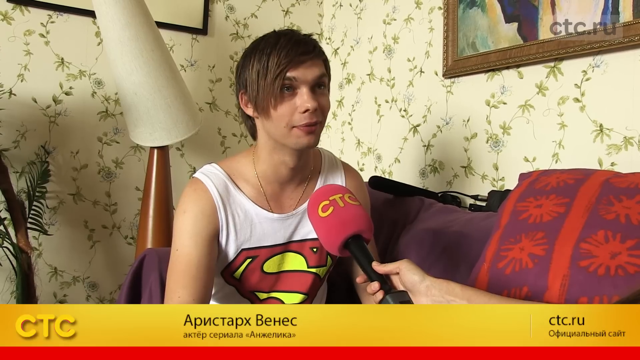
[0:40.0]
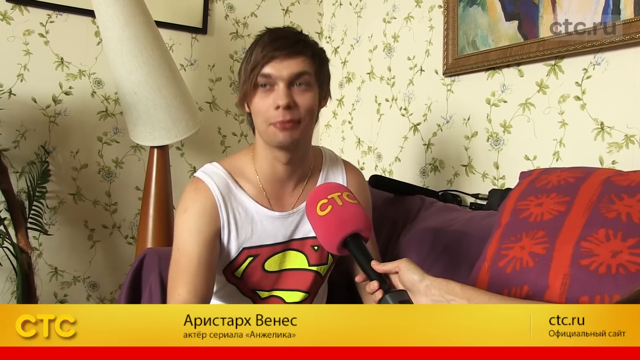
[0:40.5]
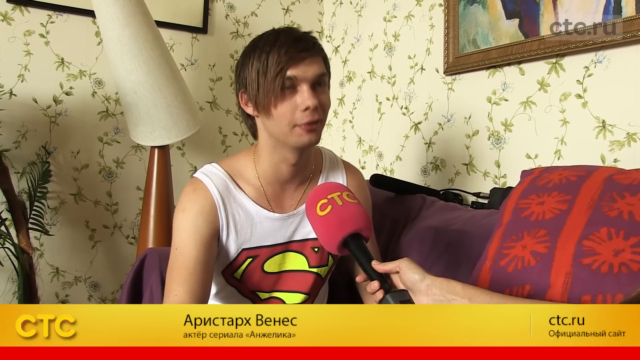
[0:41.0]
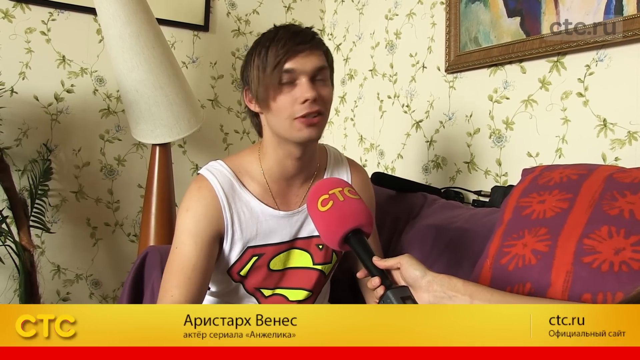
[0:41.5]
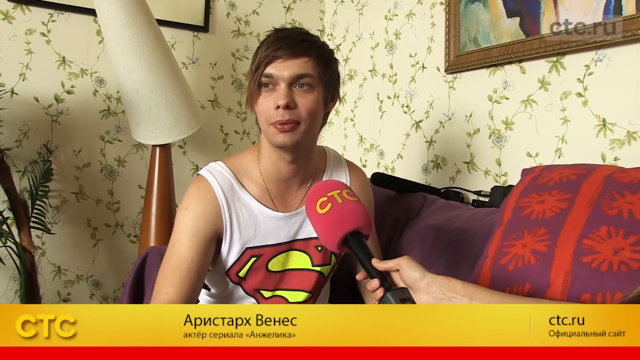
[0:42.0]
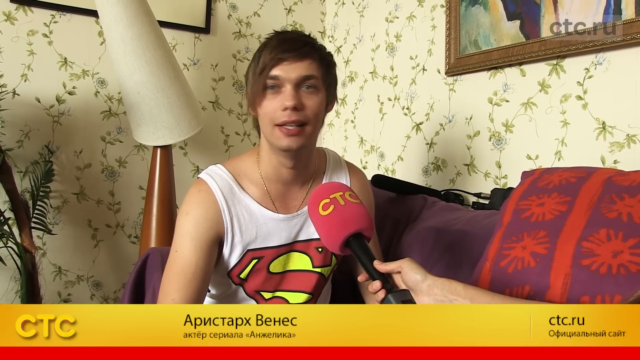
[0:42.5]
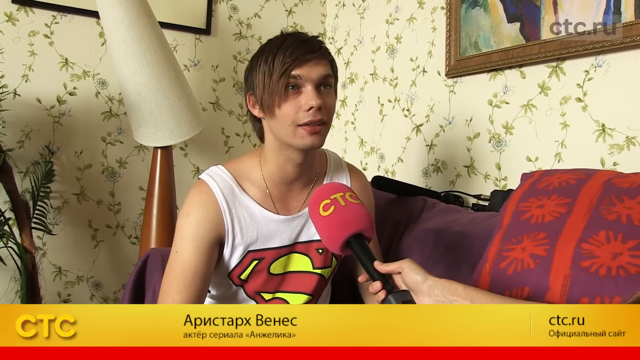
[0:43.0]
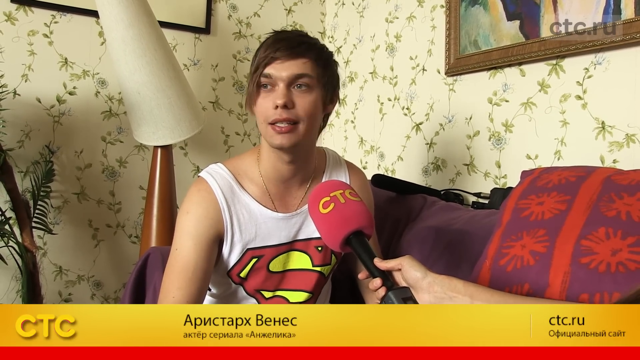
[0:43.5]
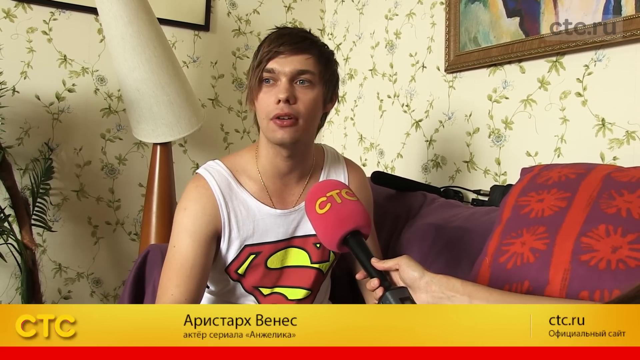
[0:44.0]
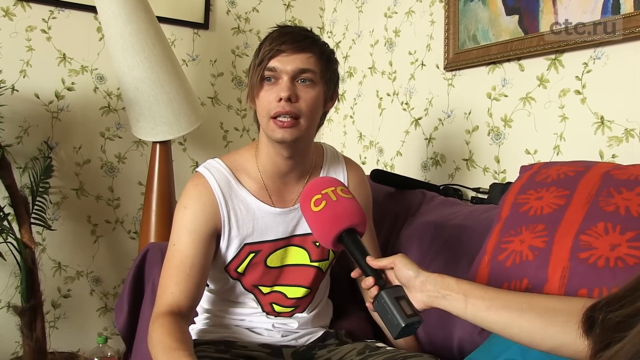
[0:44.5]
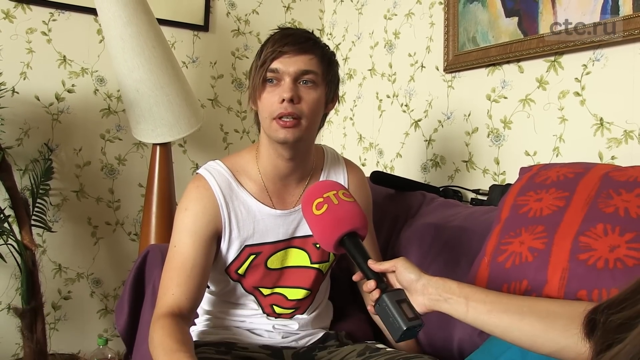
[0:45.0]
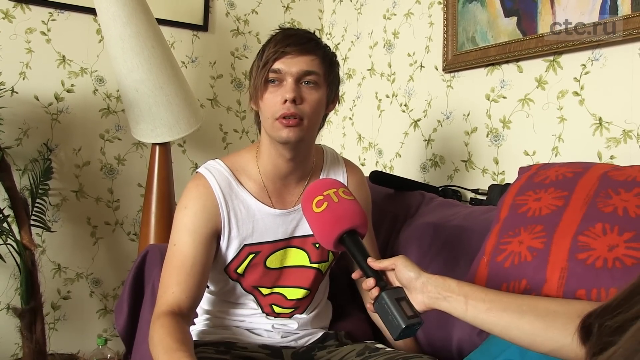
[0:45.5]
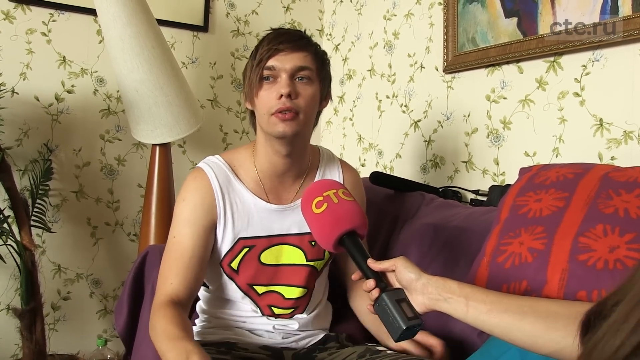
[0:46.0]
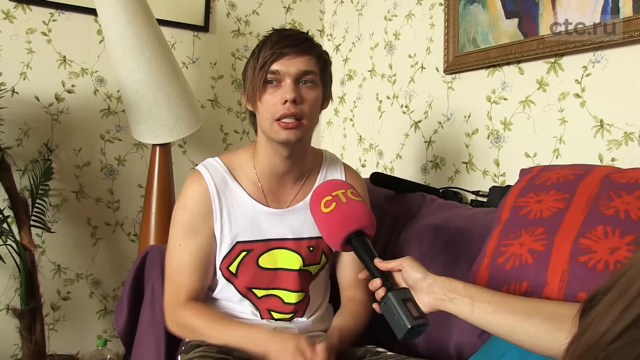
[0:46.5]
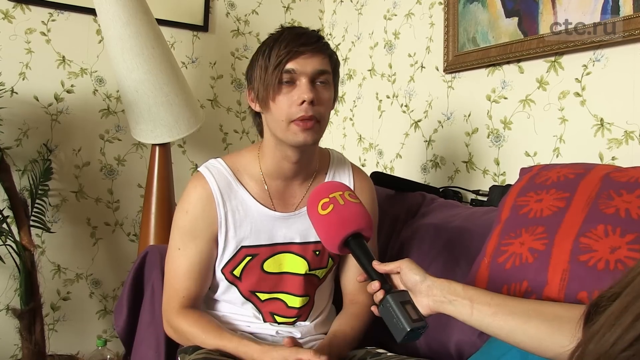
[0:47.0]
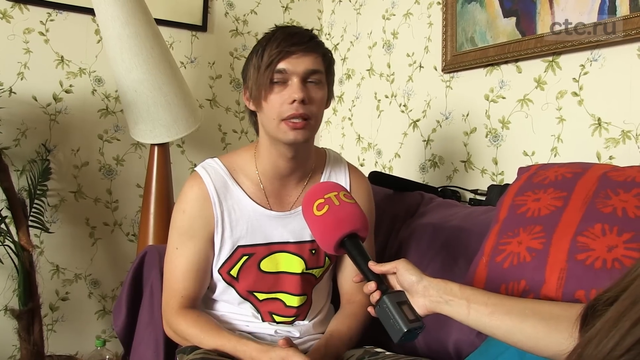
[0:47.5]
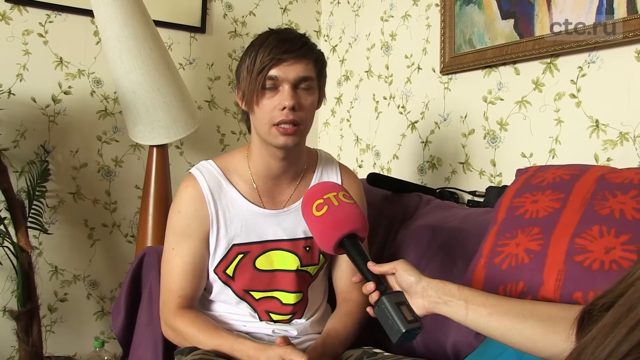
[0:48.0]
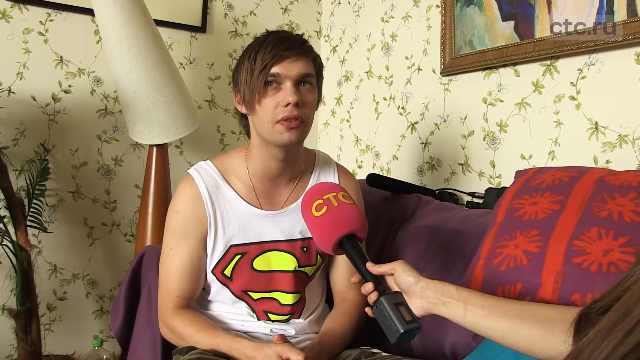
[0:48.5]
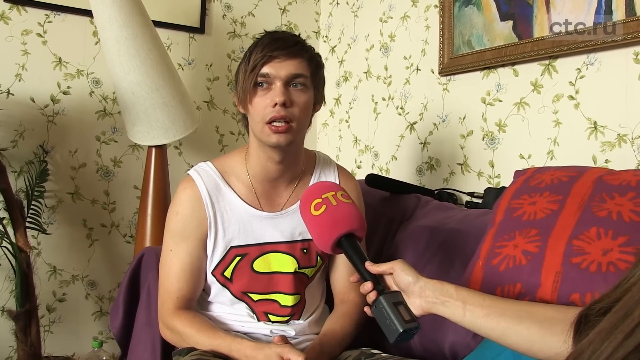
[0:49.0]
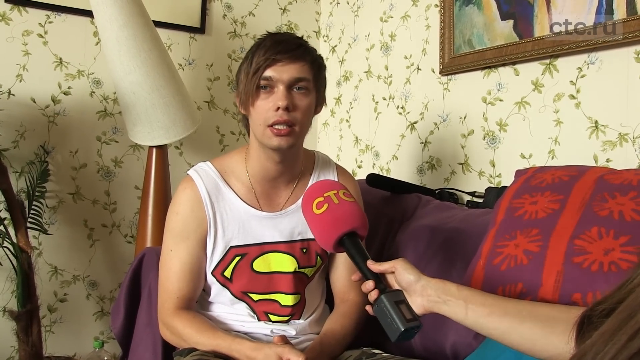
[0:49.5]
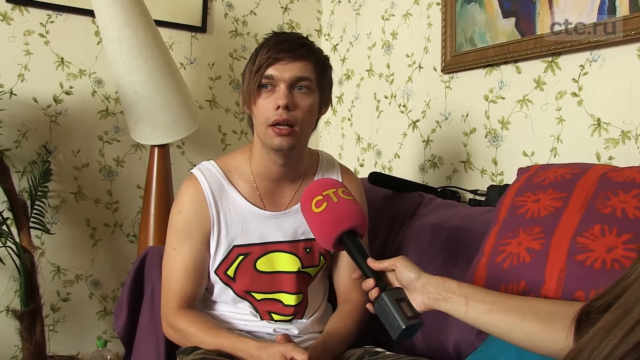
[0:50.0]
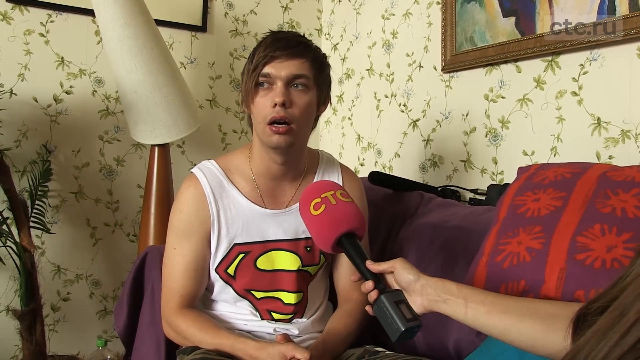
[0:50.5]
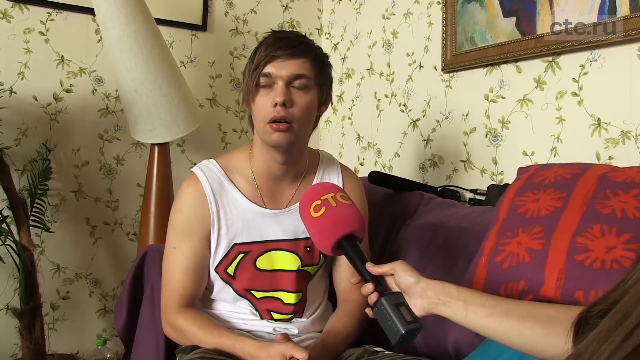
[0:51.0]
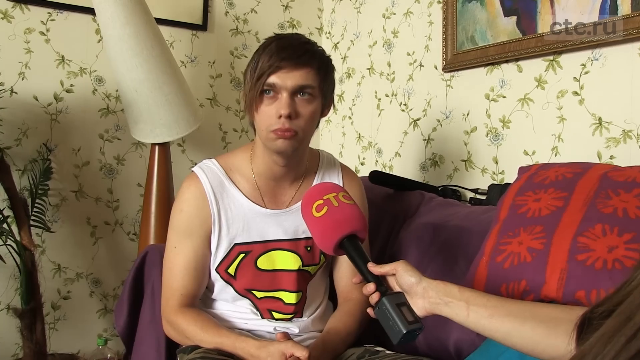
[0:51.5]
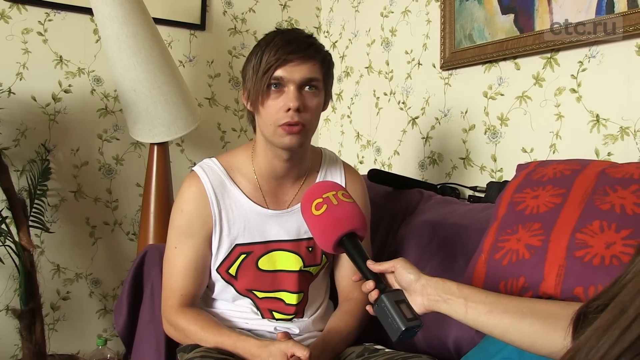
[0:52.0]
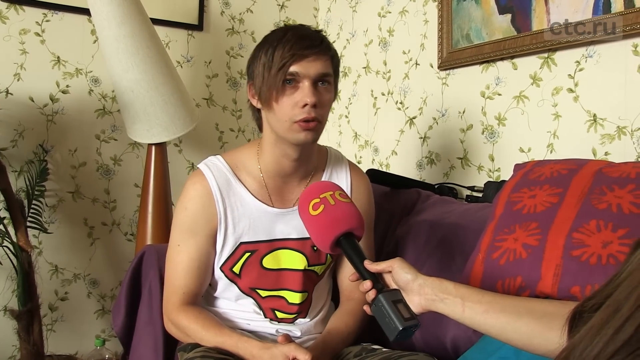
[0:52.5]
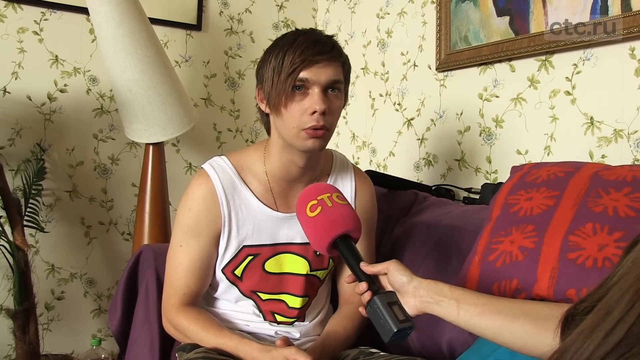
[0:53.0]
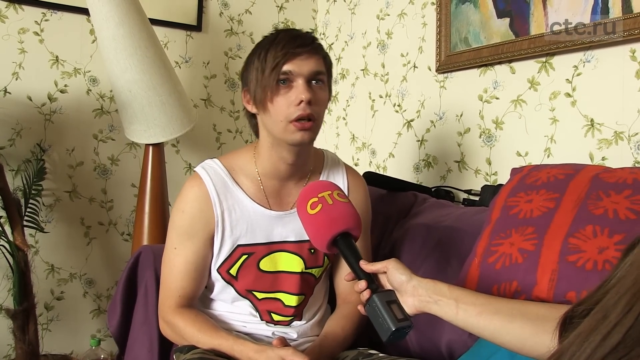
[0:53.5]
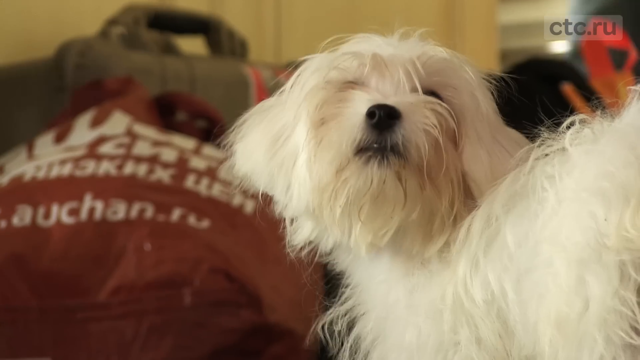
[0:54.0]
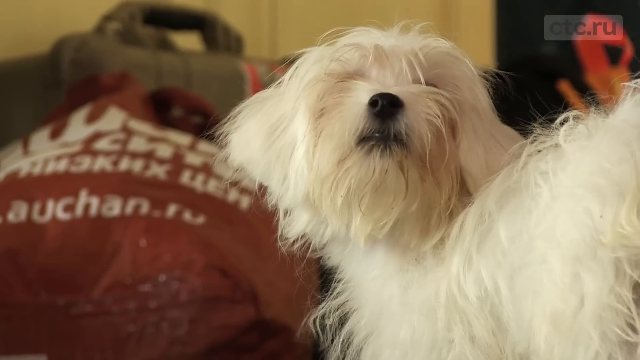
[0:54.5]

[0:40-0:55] The white guy in the Superman shirt is interviewed with a CTC microphone, with "ctc.ru" on screen. He talks while sitting on a couch in the same room. A white dog is on the floor, and there is a bag with Russian writing.